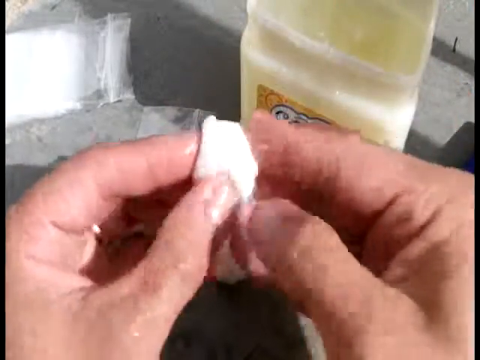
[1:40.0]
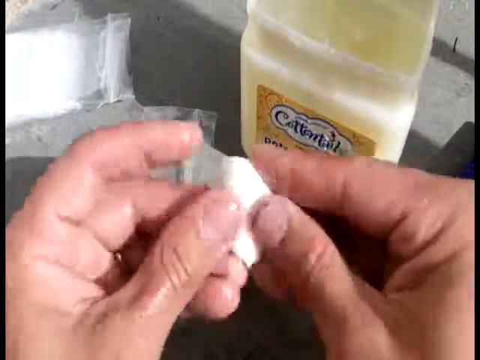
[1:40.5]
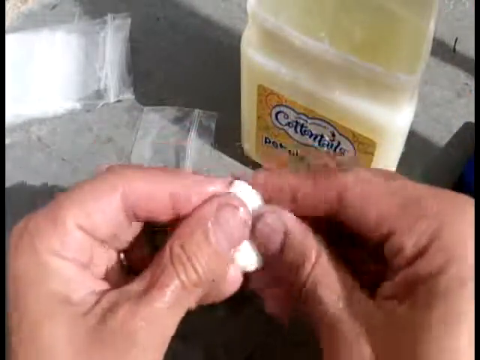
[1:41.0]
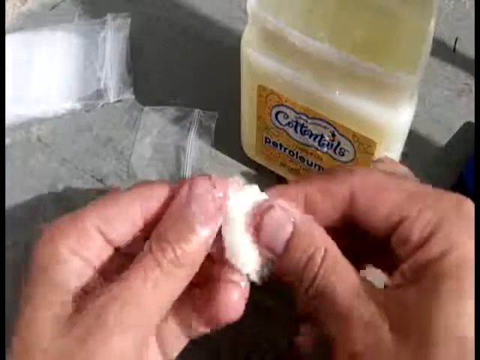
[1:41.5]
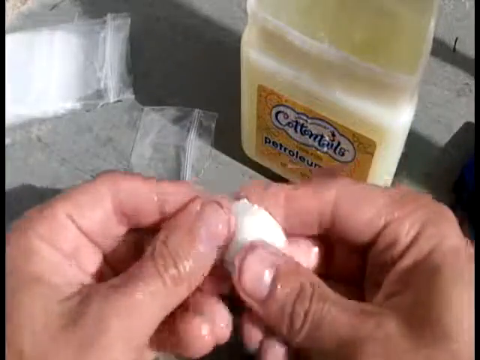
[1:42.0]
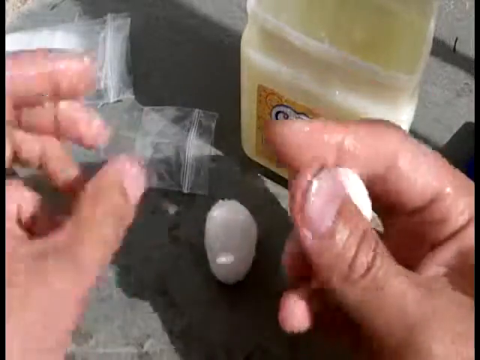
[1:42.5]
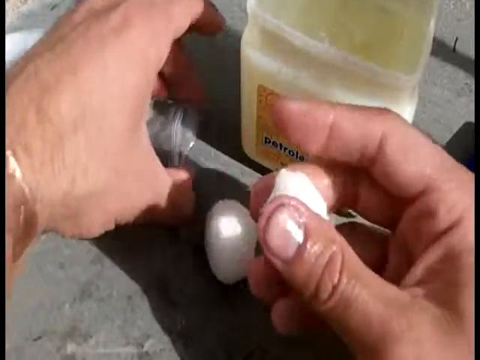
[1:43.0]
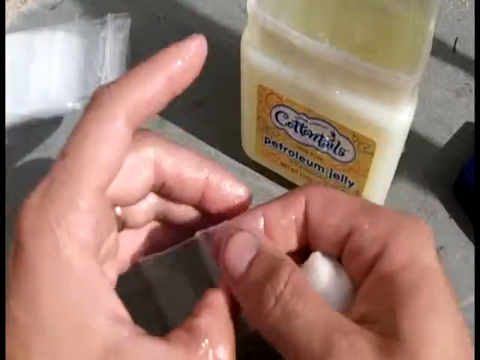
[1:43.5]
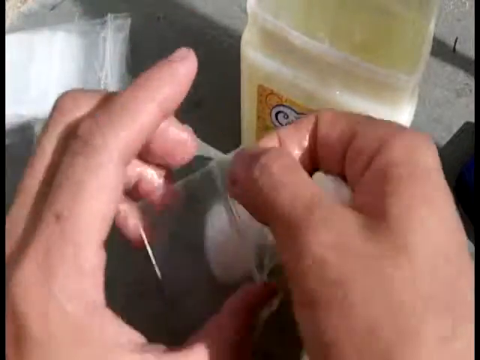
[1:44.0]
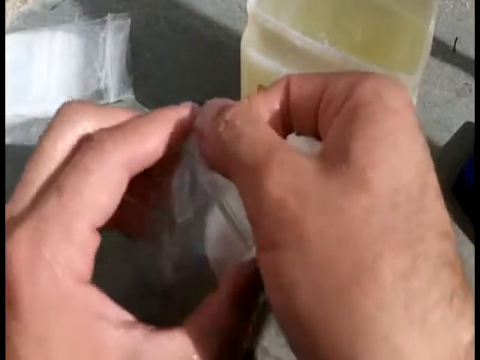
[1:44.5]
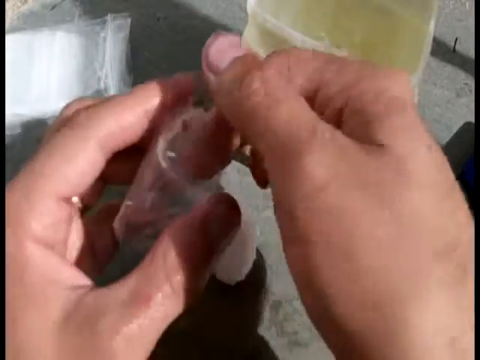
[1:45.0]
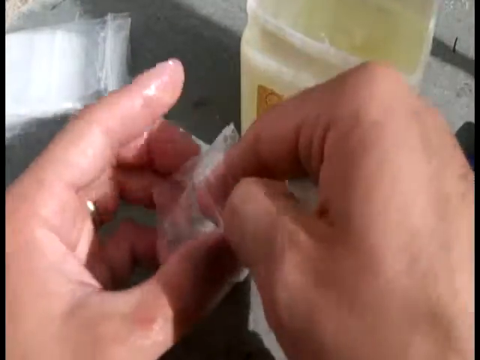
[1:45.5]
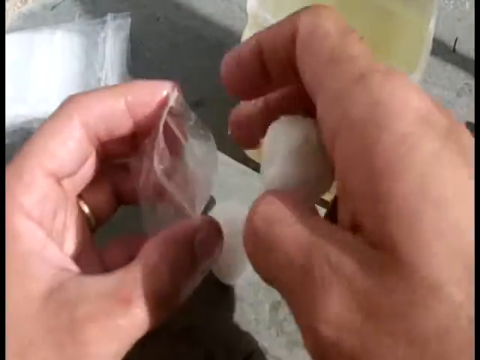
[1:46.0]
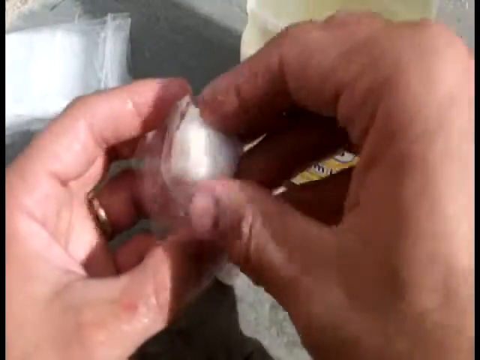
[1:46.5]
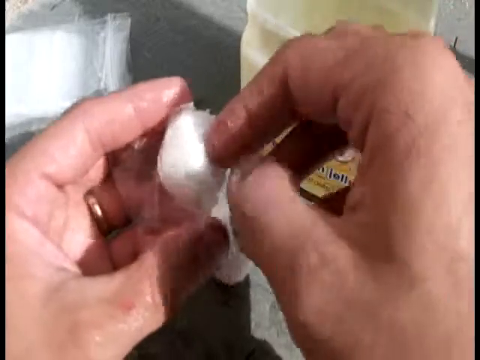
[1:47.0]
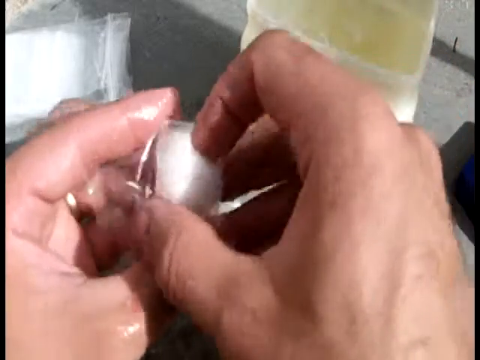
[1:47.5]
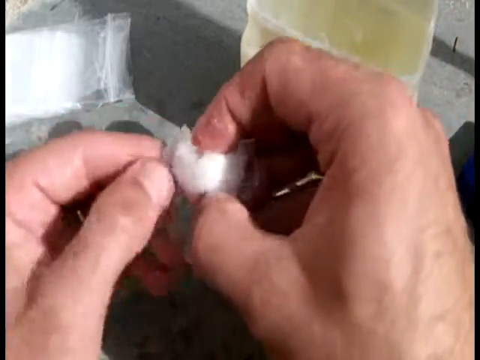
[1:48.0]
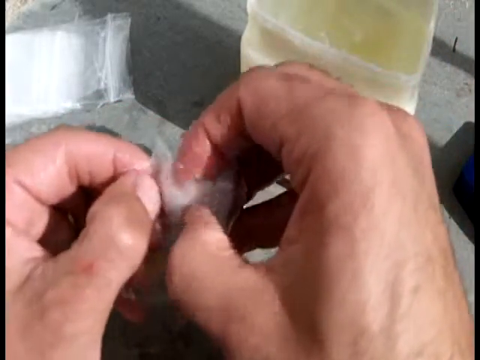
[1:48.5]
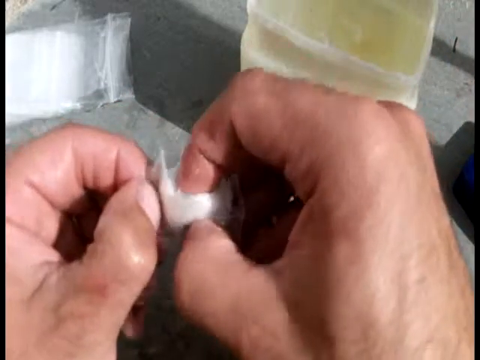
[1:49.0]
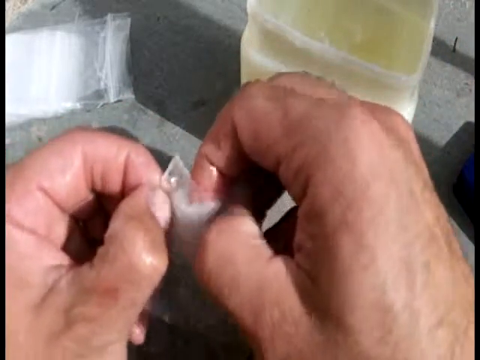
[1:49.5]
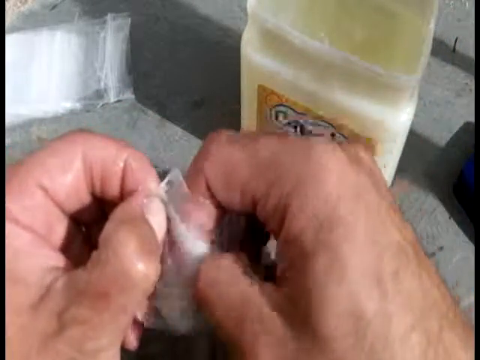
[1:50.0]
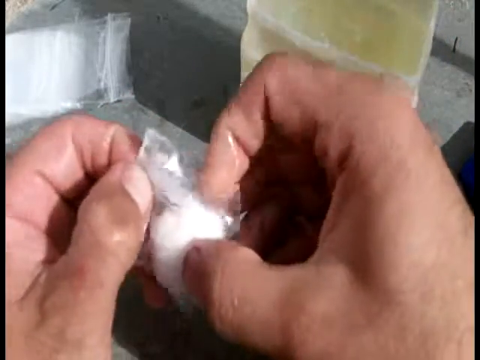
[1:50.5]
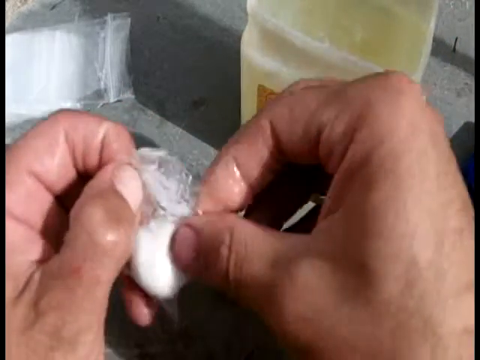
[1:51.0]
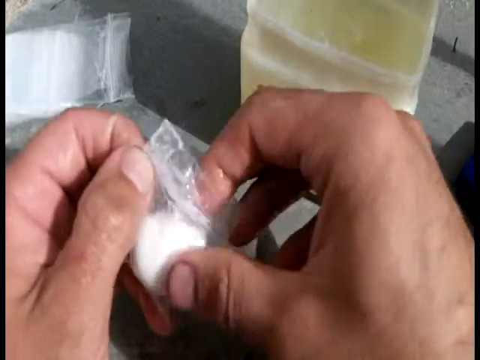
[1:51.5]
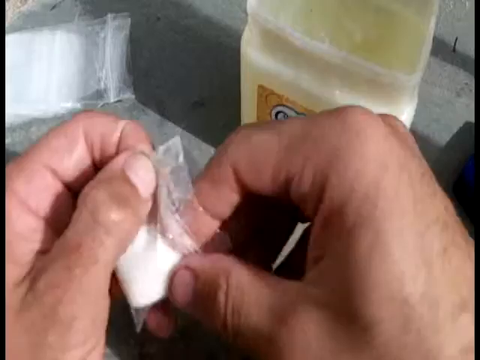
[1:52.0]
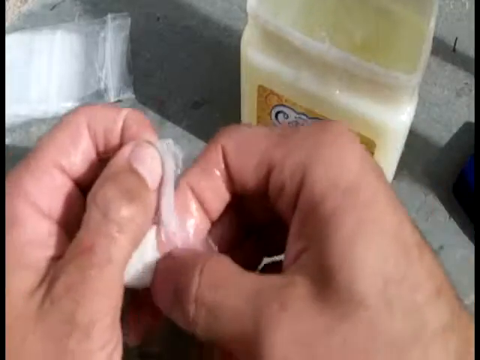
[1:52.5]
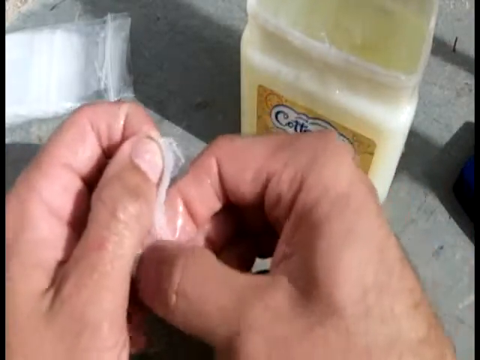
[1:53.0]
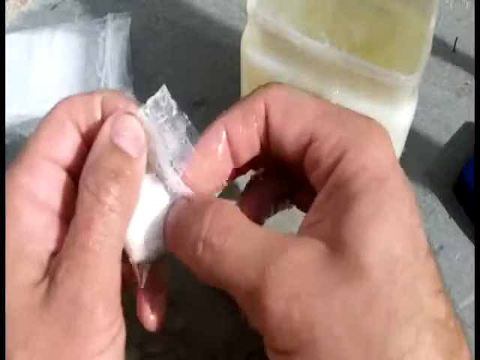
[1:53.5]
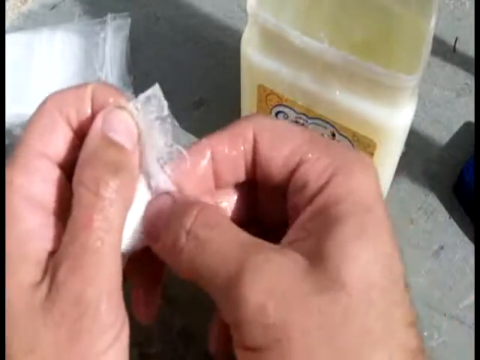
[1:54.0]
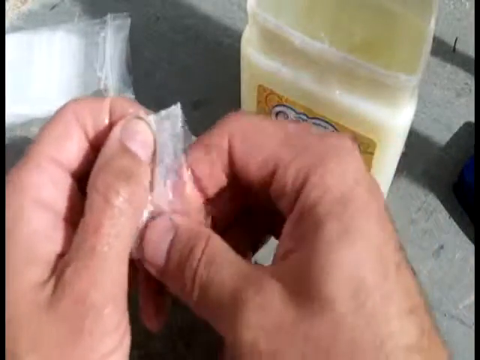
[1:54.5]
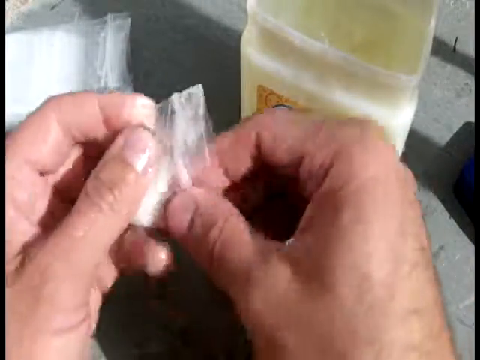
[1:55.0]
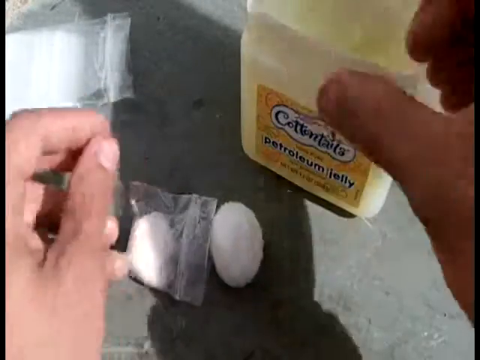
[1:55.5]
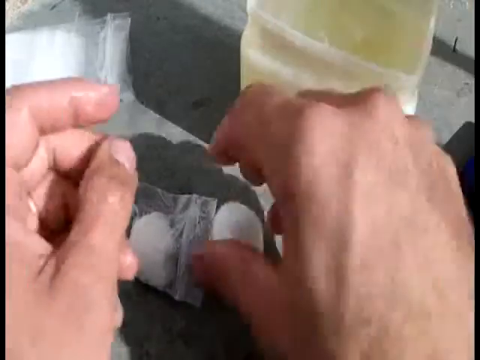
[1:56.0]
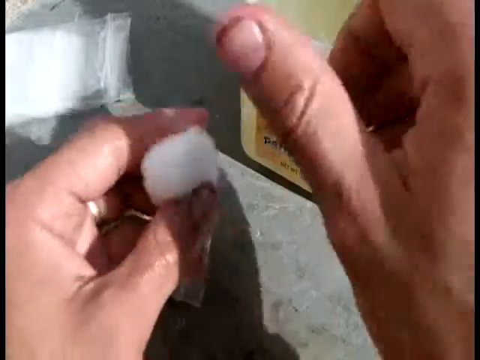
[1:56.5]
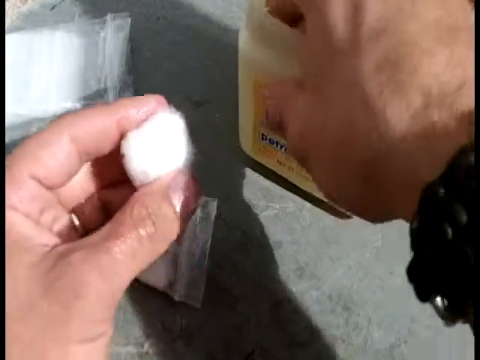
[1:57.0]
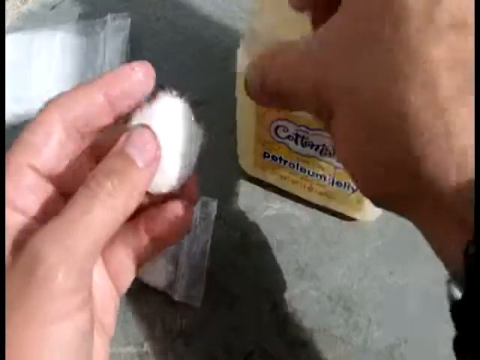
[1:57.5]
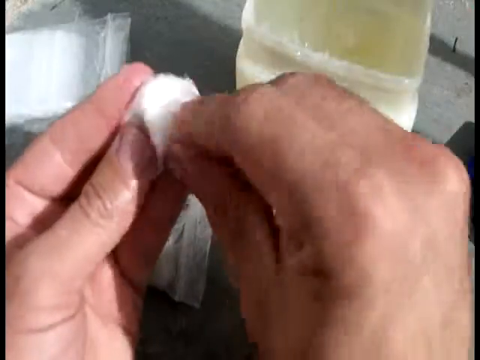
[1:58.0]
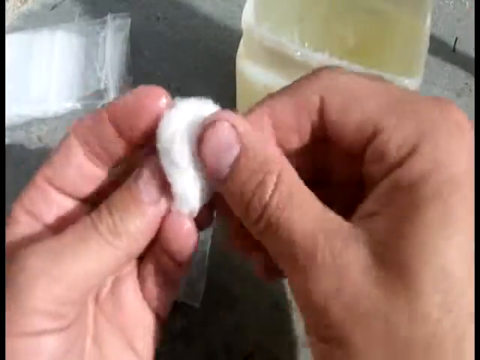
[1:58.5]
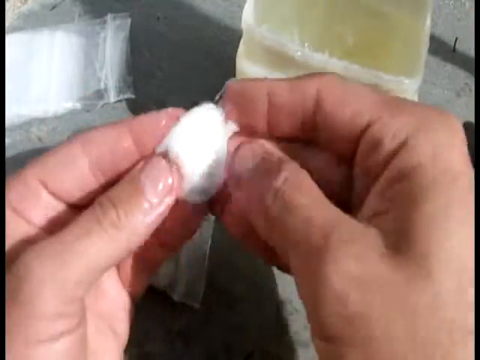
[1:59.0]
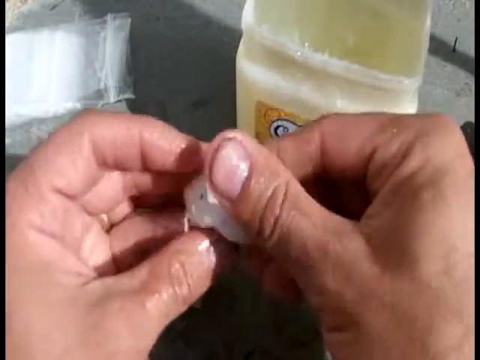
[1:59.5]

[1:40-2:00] In close-up, two hands hold a small white cotton ball in their fingertips, rubbing it with their fingers while rotating it. The fingers are coated with shiny petroleum jelly from the jar of Cottontails petroleum jelly sitting on the table. The hands pick up a small Ziploc bag, sort of stick an index finger inside to open it, and put the cotton ball into the bag, shoving it down with the index finger all the way to the bottom. They then pick up the other small white cotton ball from the table, reach their fingers into the open jar of petroleum jelly, grab a small scoop, and rub it directly onto the cotton ball, smearing it off their fingers. The fingers begin to rub and massage the petroleum jelly onto the cotton ball.